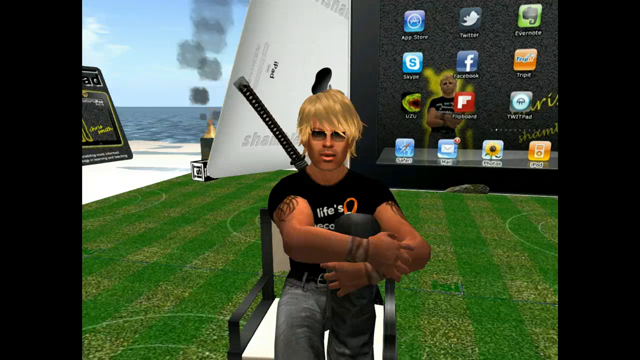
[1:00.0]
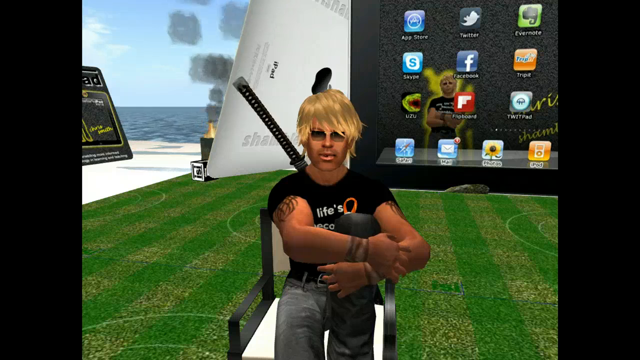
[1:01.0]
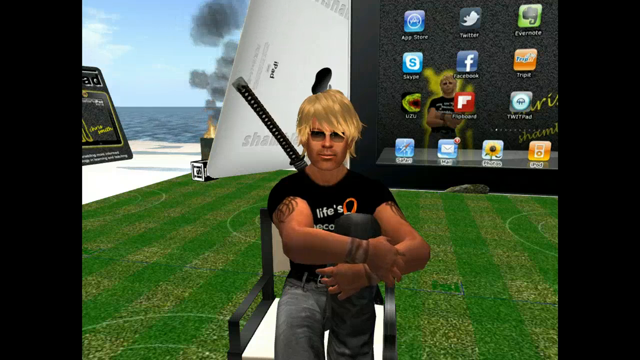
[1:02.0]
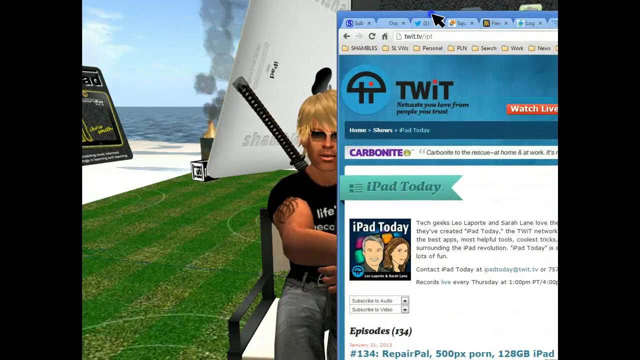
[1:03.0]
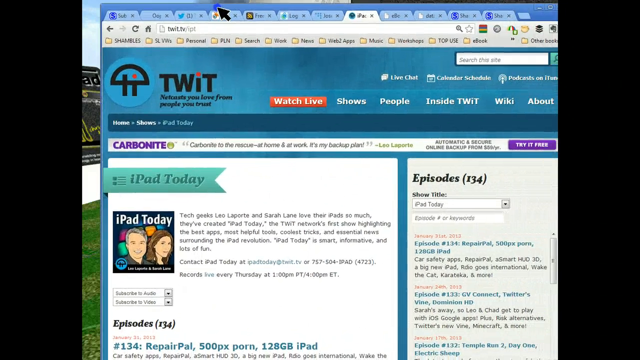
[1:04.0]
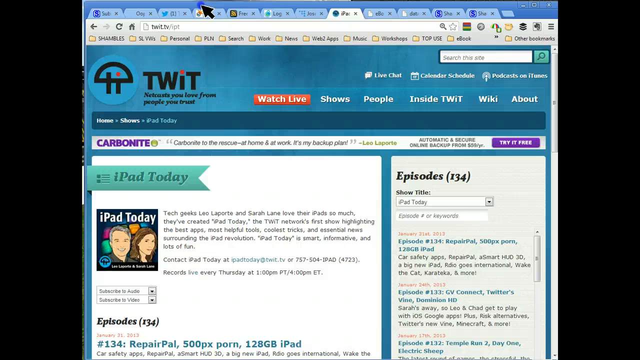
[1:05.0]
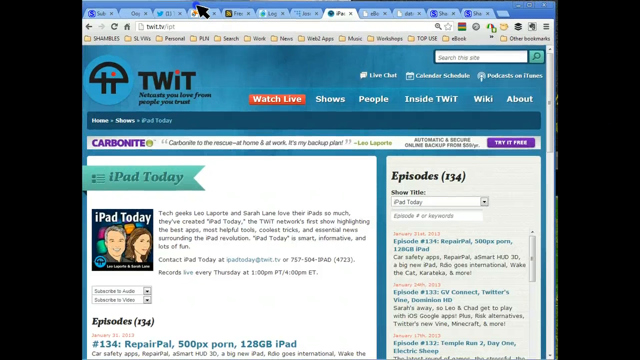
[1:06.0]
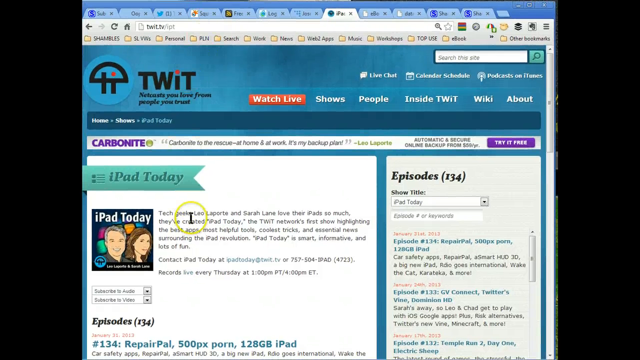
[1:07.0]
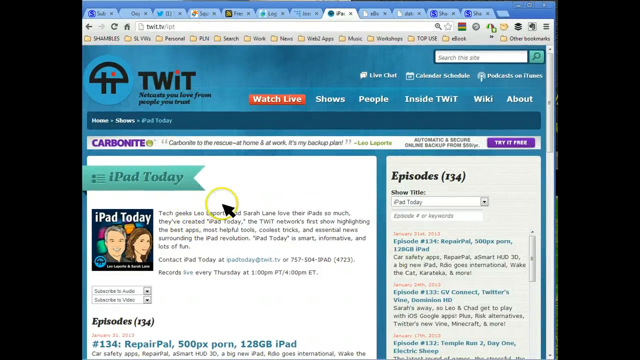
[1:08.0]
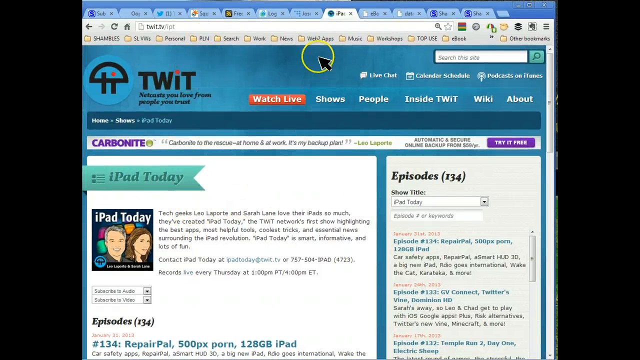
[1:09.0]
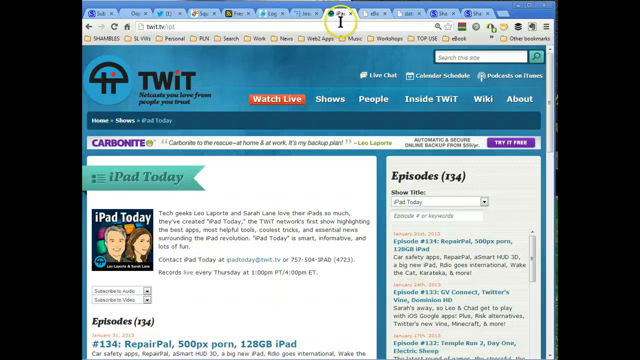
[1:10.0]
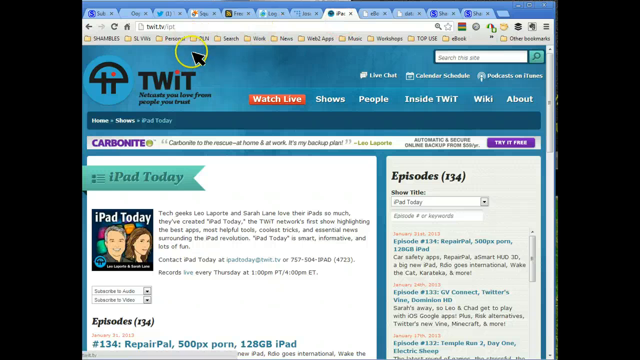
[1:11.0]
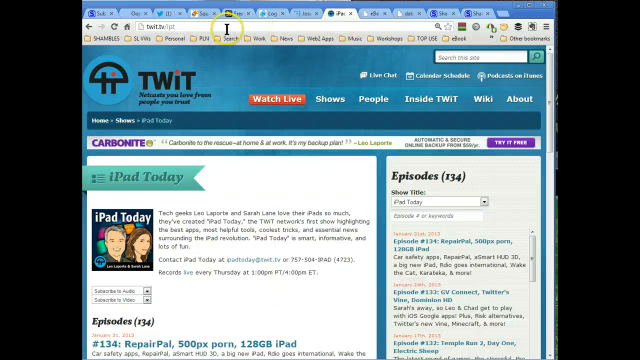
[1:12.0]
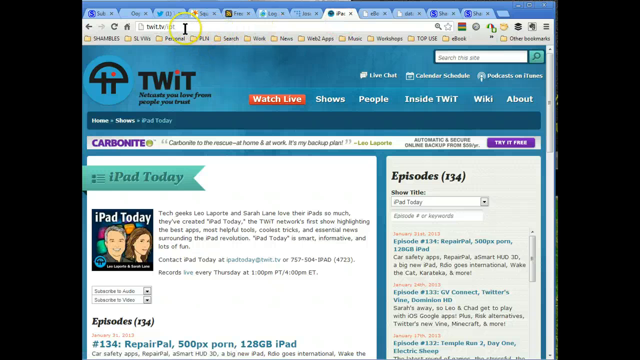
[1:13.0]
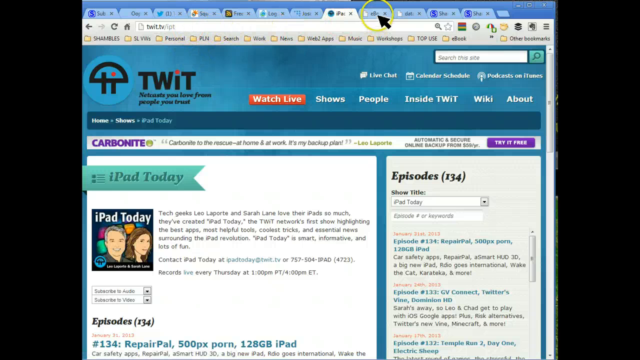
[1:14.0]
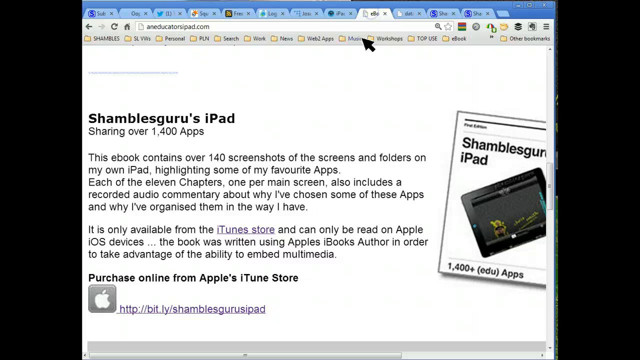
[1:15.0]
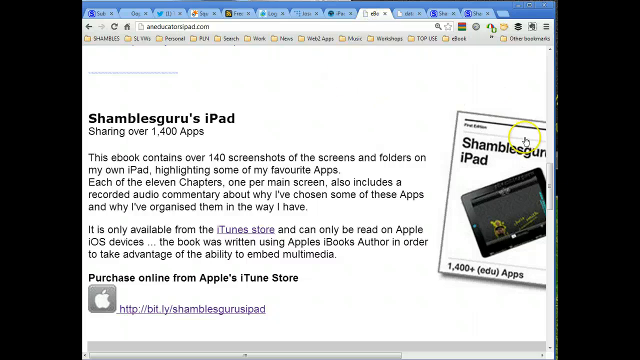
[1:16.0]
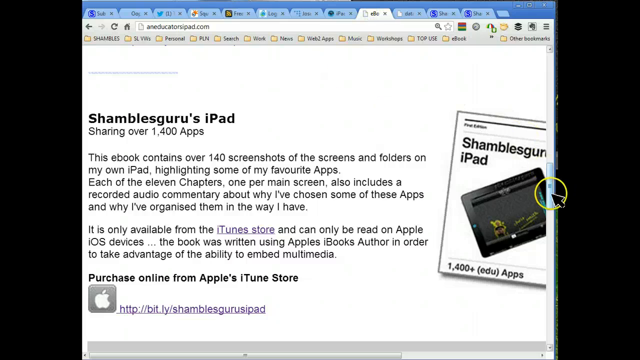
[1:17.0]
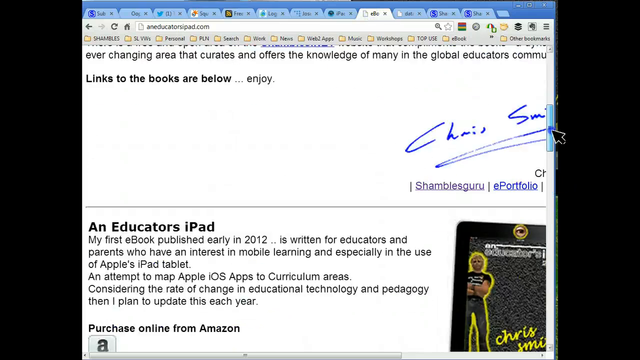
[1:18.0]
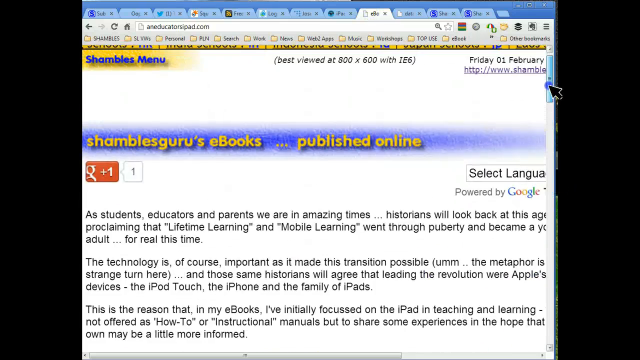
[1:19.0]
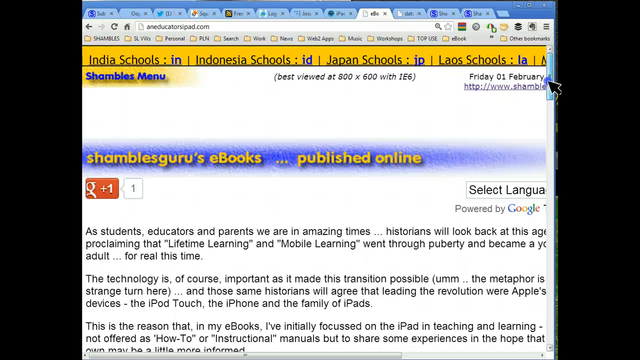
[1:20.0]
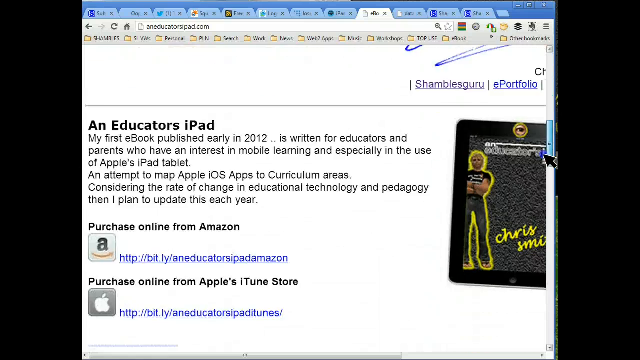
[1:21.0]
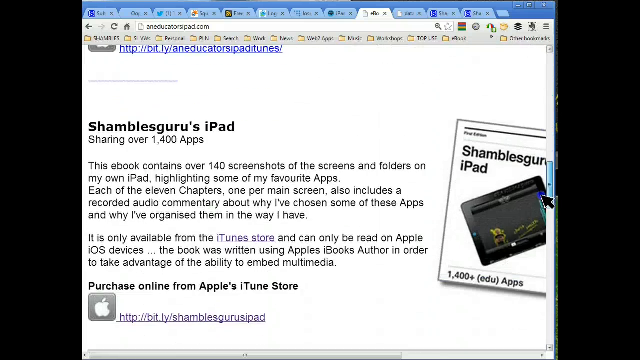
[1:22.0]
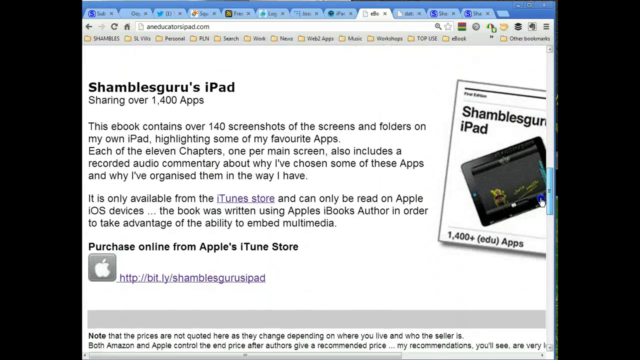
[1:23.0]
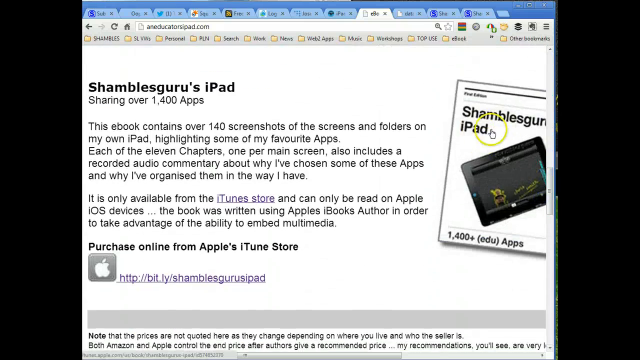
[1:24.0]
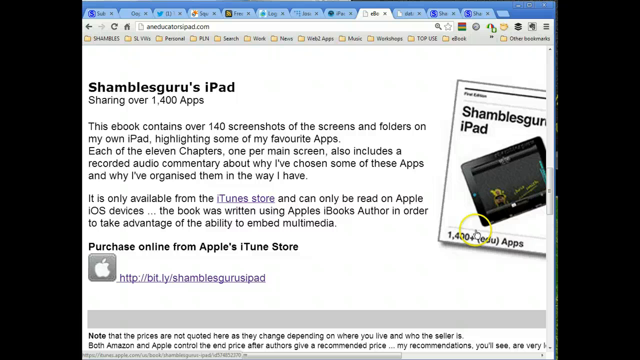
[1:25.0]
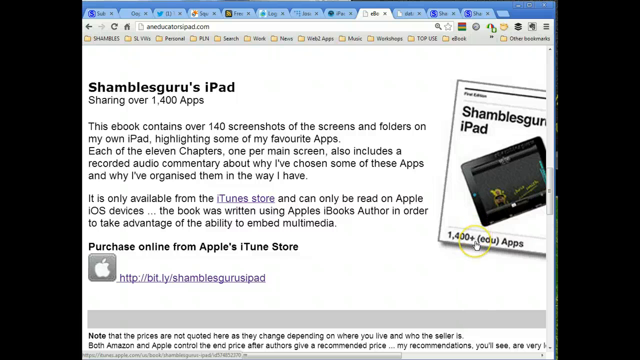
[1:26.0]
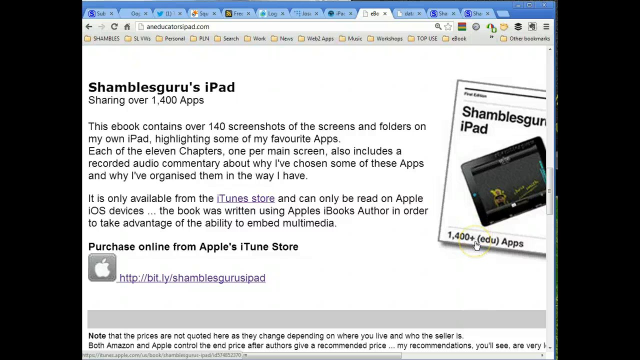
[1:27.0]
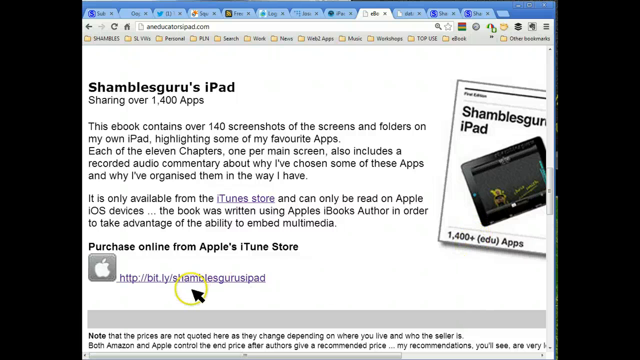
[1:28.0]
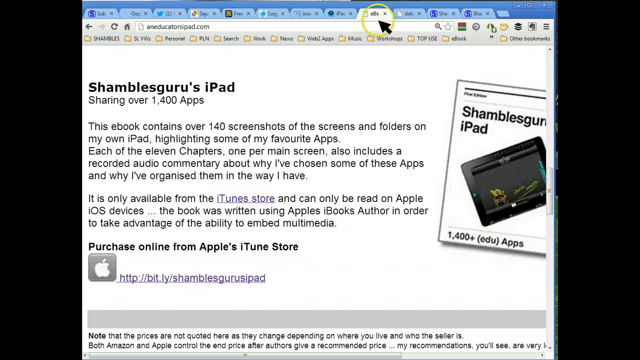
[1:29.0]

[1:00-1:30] The camera comes to a boy sitting on a black and white chair. He has blonde hair and wears a black t-shirt and black jeans. His lips are moving, apparently as he talks. He is also tying a black belt. The chair is on green grass, and there are iPads all over the place. The back of another iPad is visible, showing white, with smoke coming out in front of it. Another iPad behind the boy is switched on, and its screen is visible. The video then goes to a page with "twist" written on it. There, the mouse searches for a website where the iPad can be bought. The site is found, and there is a link leading to the website where the iPad can be quickly purchased.